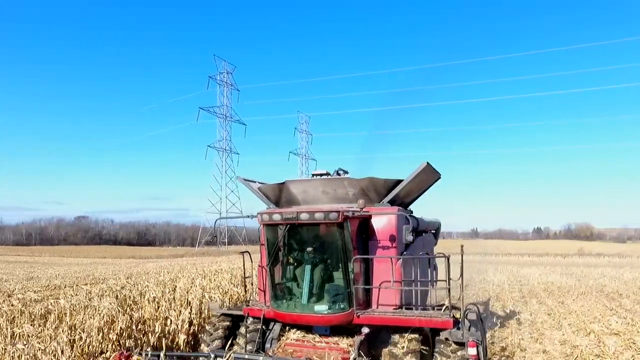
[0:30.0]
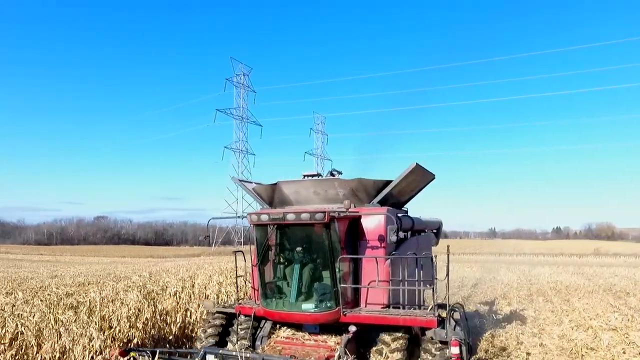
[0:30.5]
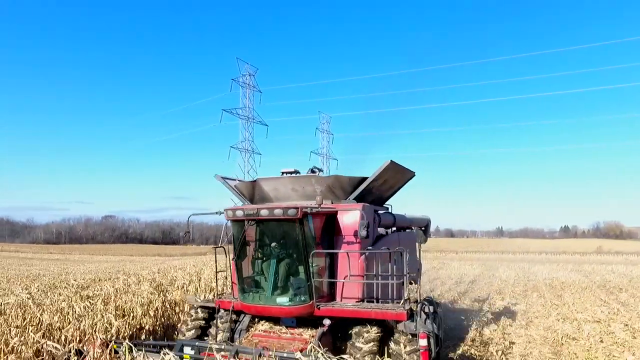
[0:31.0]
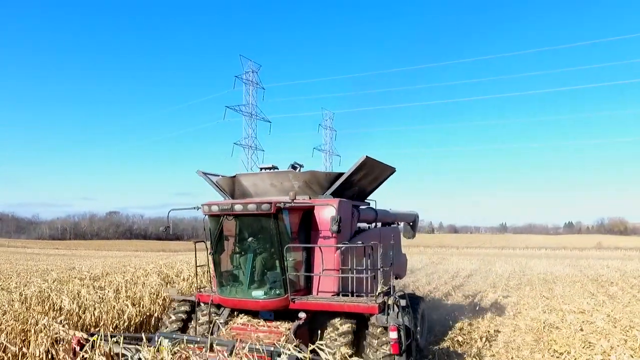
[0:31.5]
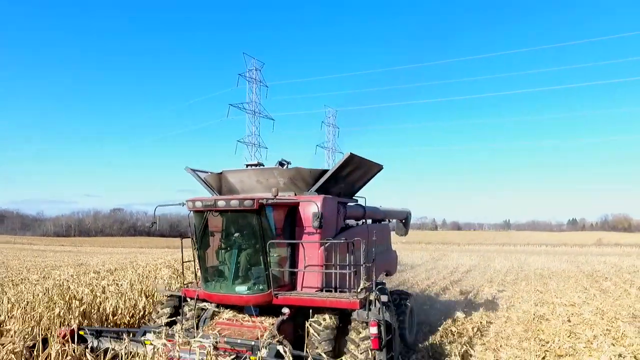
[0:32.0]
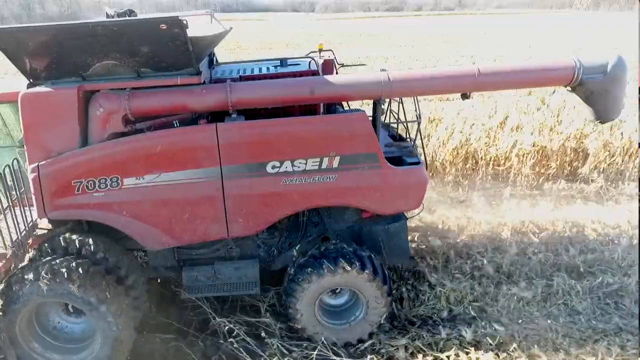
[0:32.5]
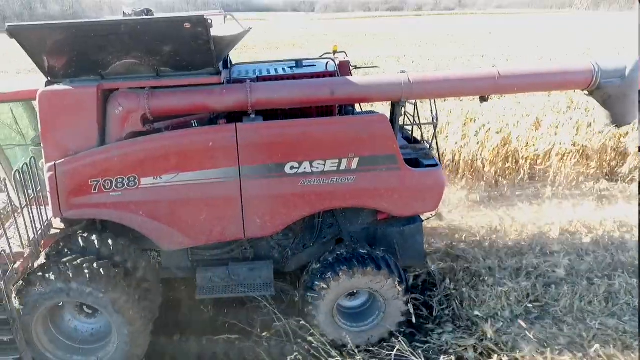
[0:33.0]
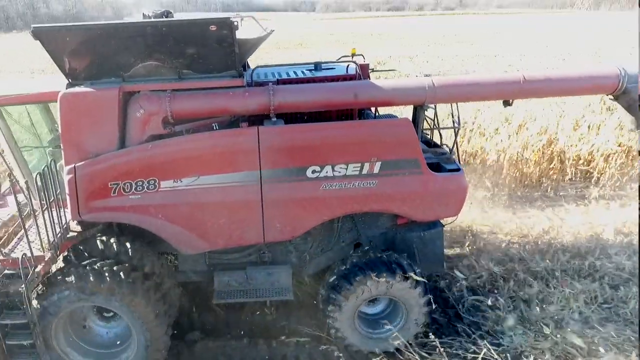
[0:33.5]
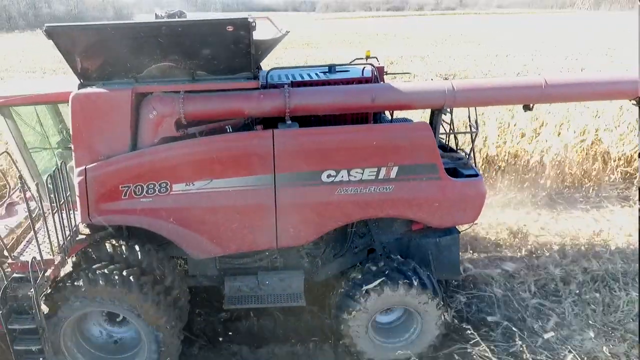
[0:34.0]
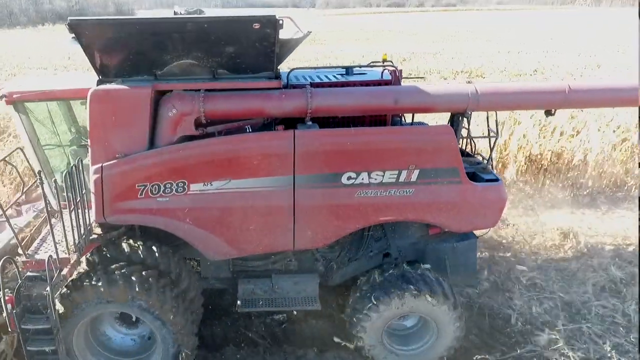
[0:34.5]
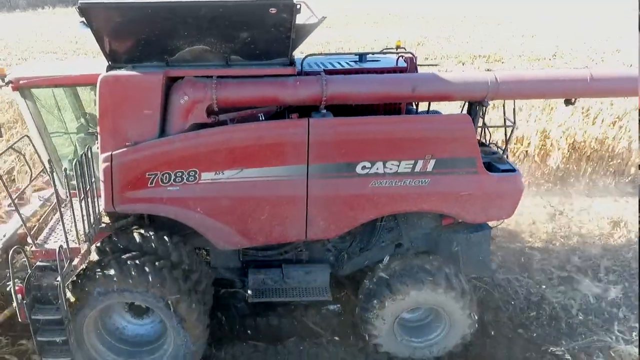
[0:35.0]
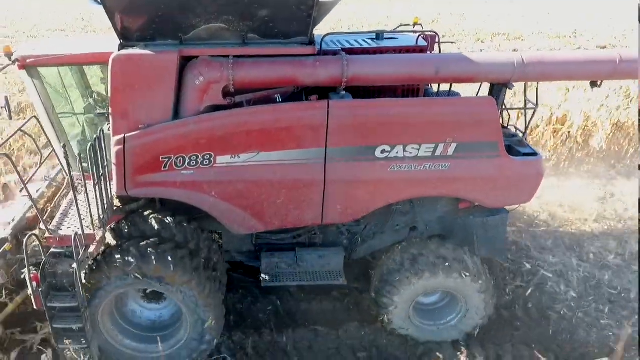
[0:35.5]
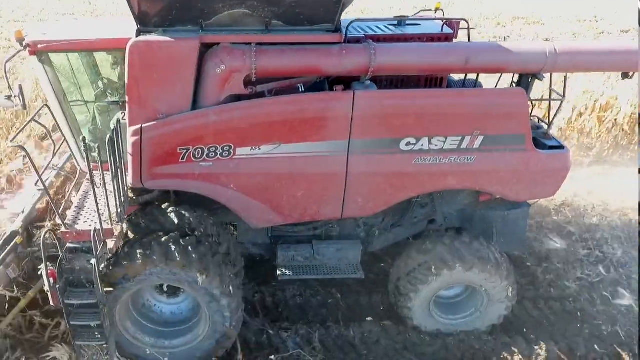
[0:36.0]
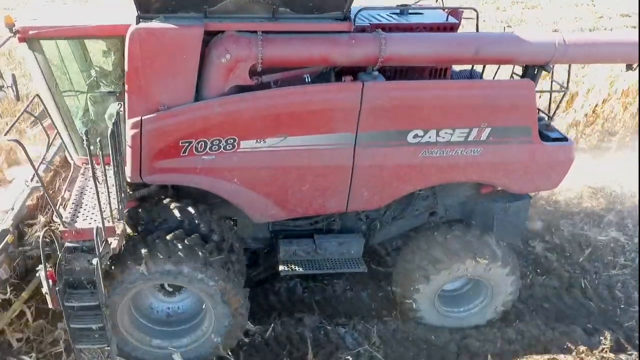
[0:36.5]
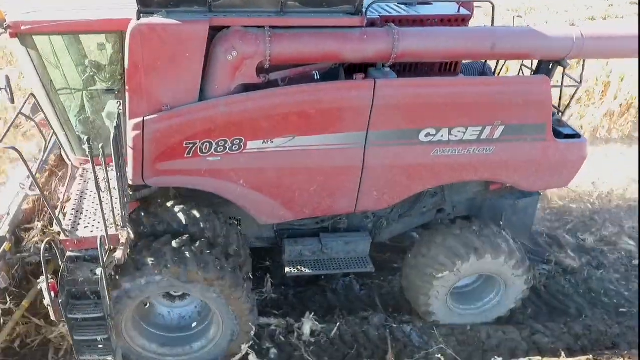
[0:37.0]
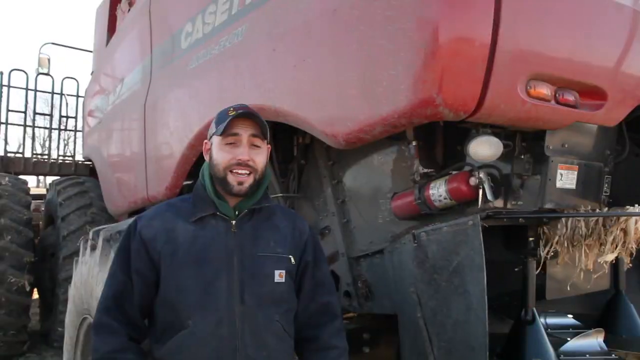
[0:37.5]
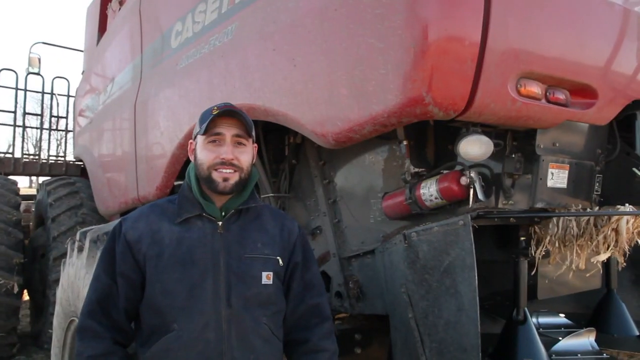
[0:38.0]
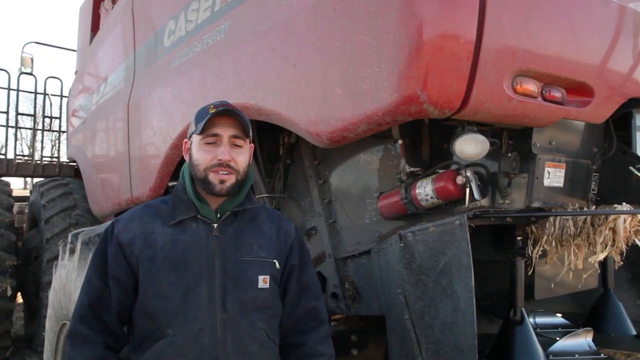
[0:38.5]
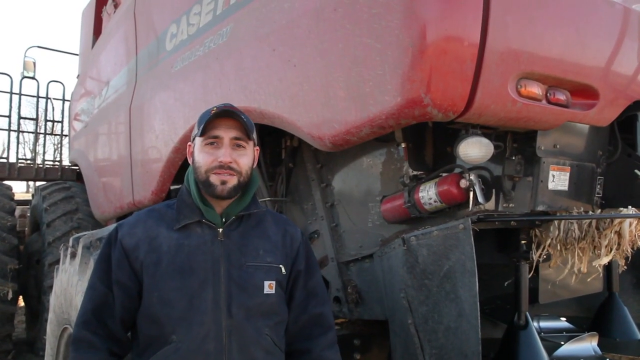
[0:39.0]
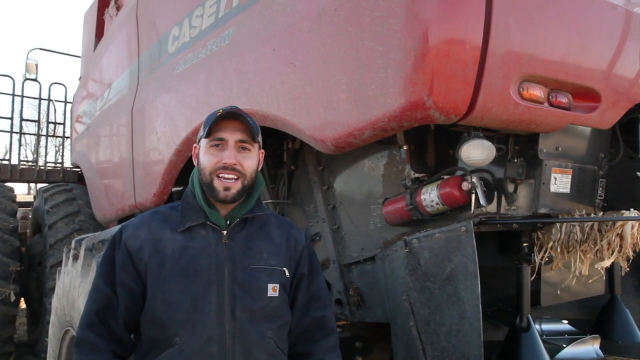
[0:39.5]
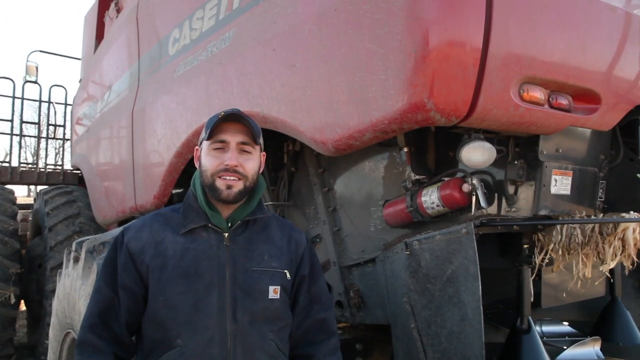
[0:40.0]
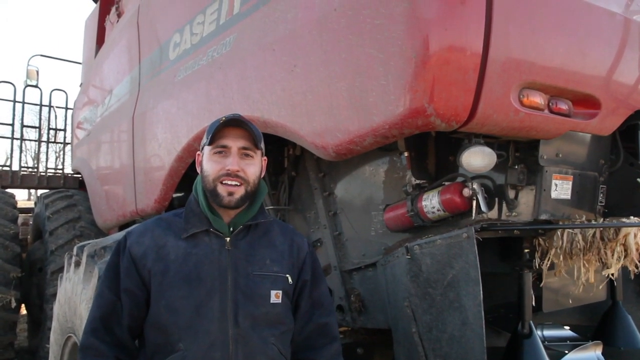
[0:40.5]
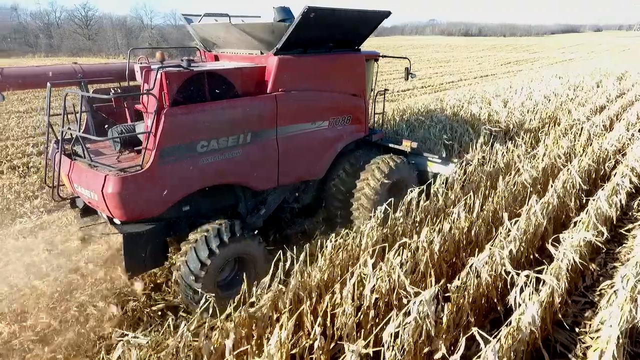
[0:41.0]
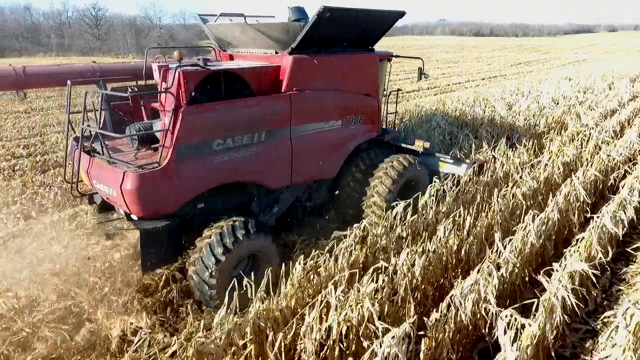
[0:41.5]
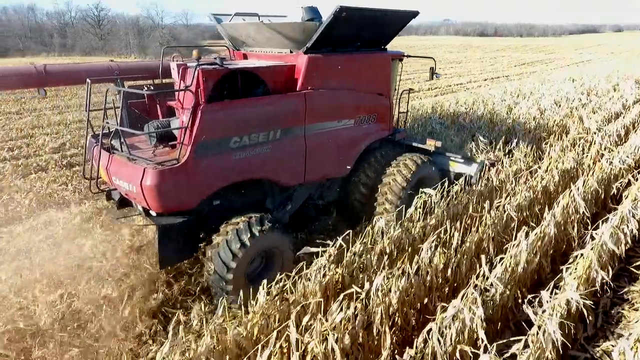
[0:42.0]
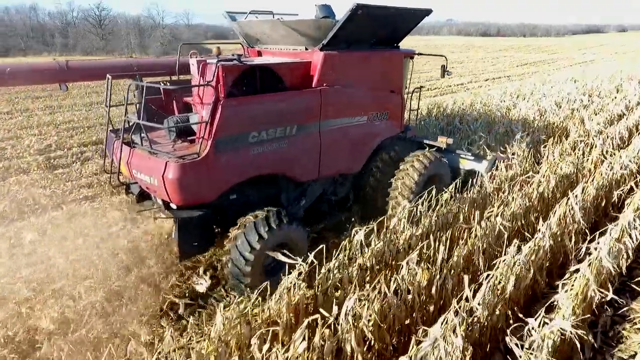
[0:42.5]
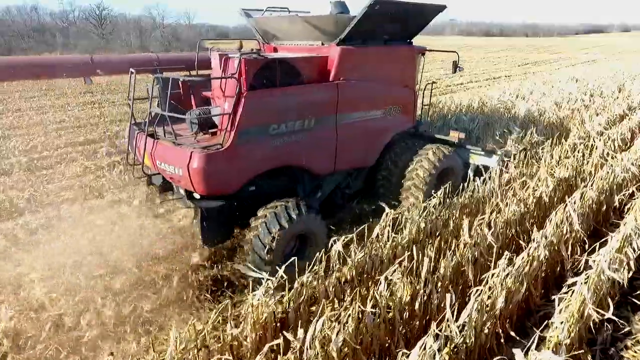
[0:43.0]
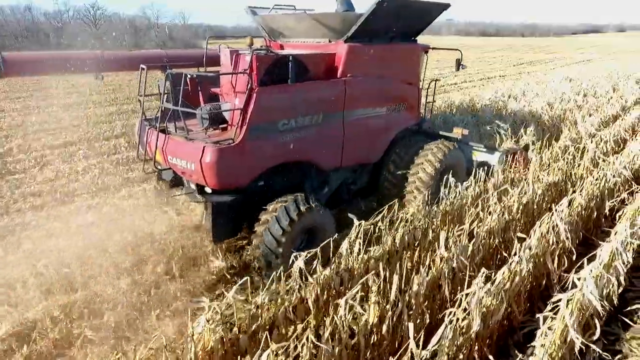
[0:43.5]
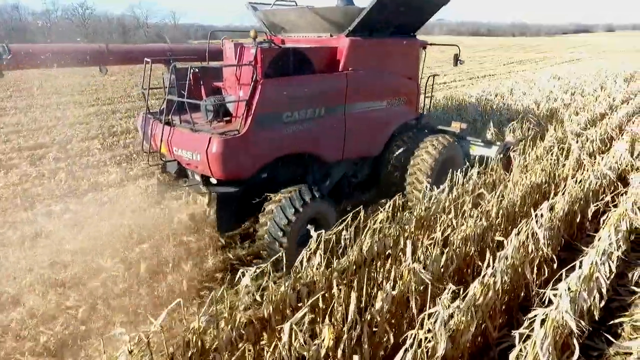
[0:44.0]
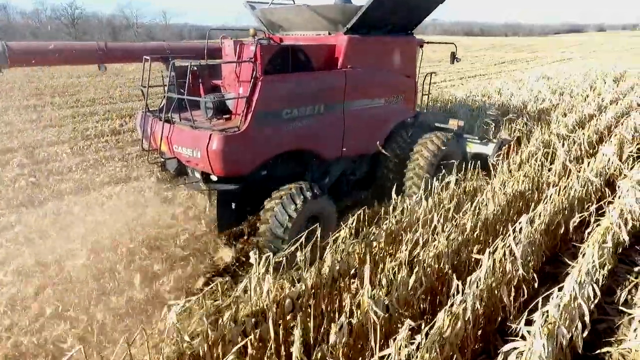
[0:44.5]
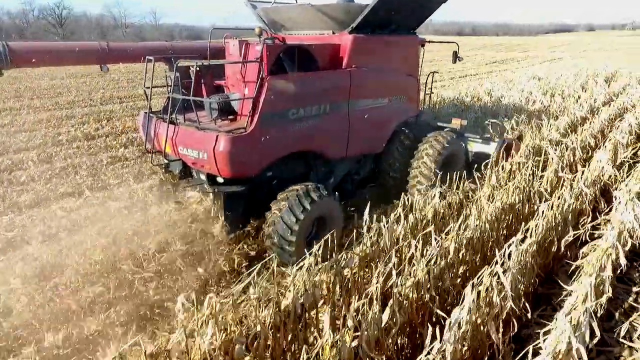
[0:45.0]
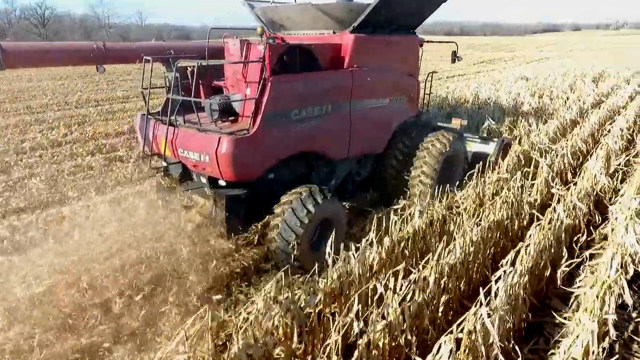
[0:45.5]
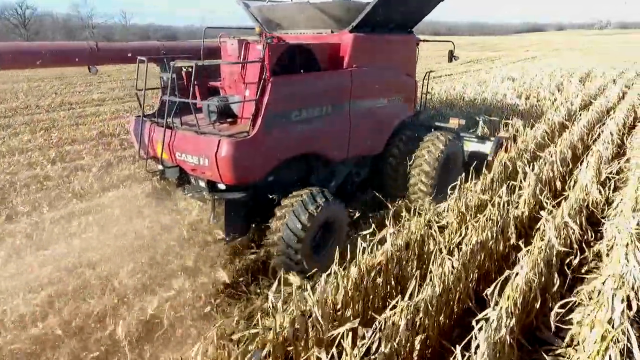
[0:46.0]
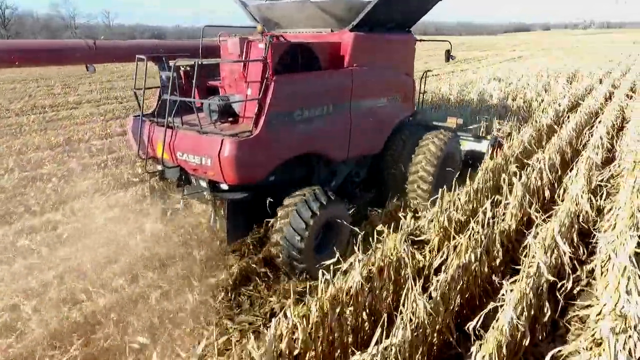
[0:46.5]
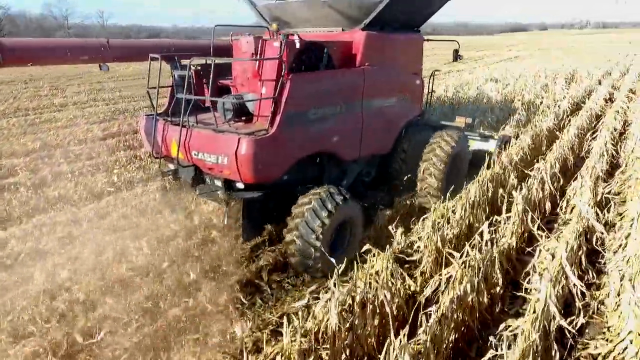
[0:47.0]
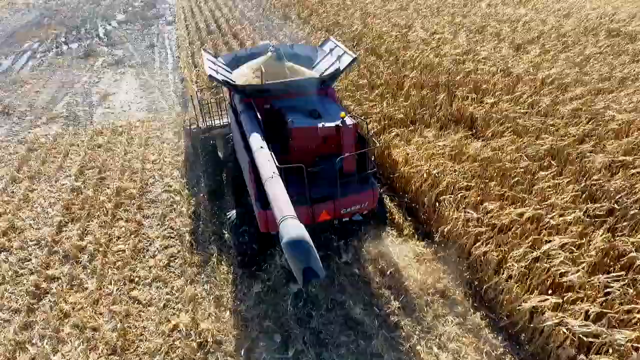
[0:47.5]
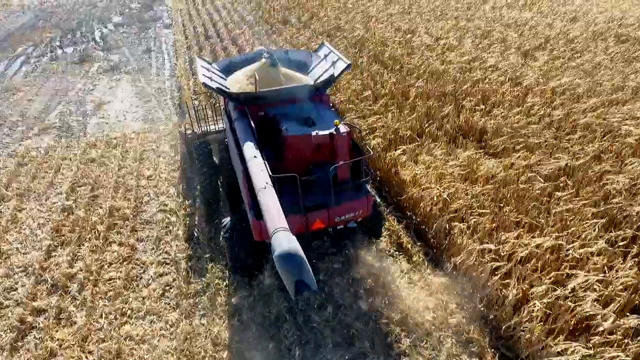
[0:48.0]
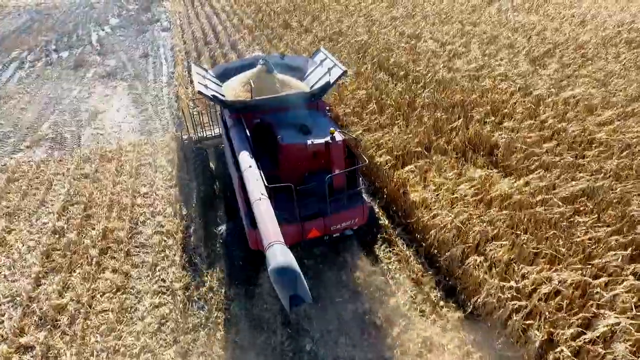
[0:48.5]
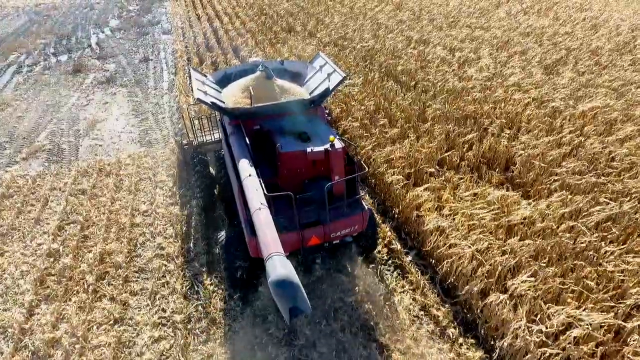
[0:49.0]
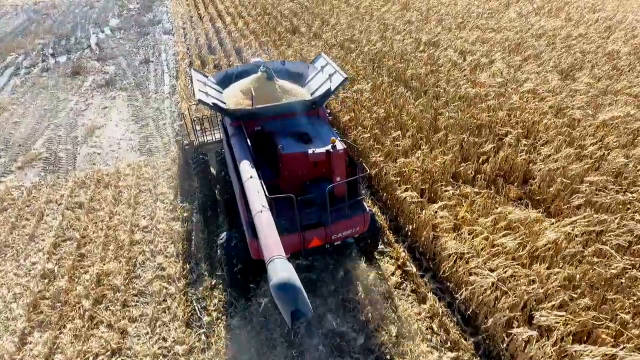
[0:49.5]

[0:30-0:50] The scene appears to remain outside in the farm field. Two power lines are visible in the background, a field of grain stretches as far as can be seen, and a tractor is driving roughly in the middle. The view then switches to a side view of the tractor, which appears to bear the same Case H with the i over it. The number on the tractor is 7088, and it is moving from right to left. The video returns to the same man talking. He wears a dark blue zip-up jacket with what looks like a green hoodie underneath and something like a ball cap; he has facial hair and talks to the camera. The camera then pans to a view of the field with the red tractor driving diagonally toward the top right of the screen, followed by another bird's-eye view of it.